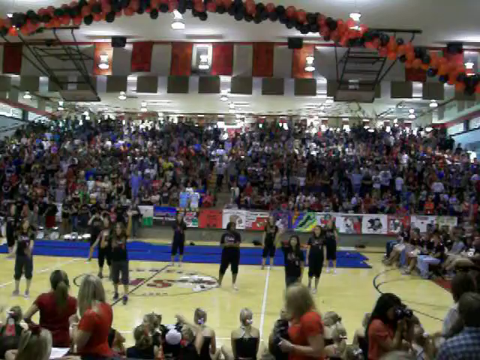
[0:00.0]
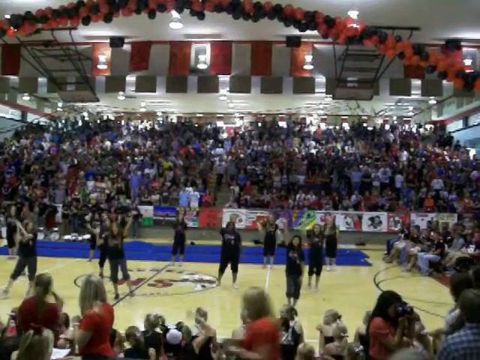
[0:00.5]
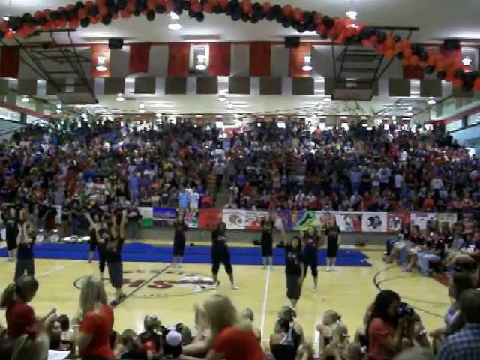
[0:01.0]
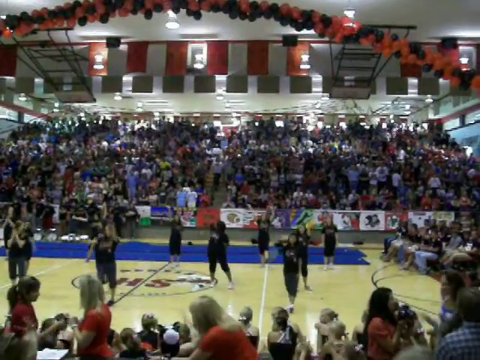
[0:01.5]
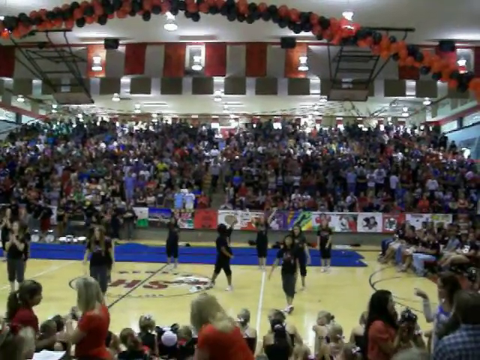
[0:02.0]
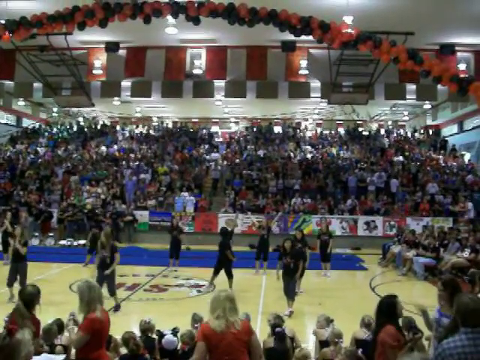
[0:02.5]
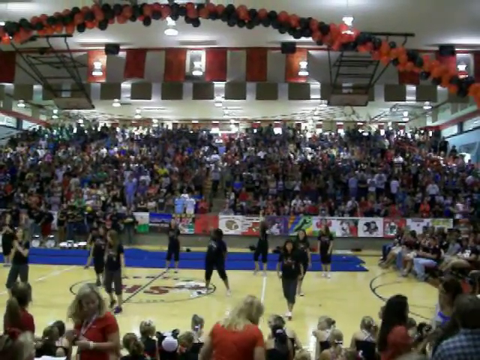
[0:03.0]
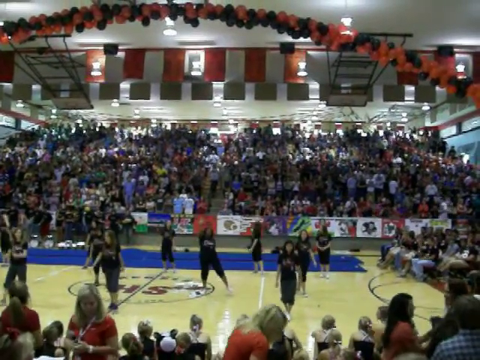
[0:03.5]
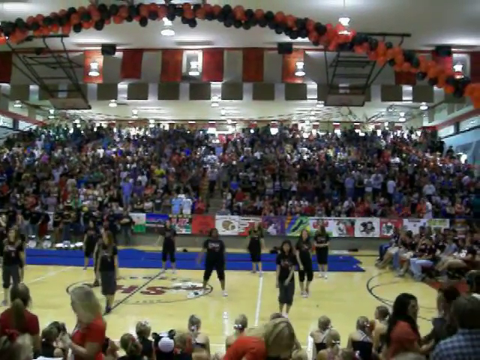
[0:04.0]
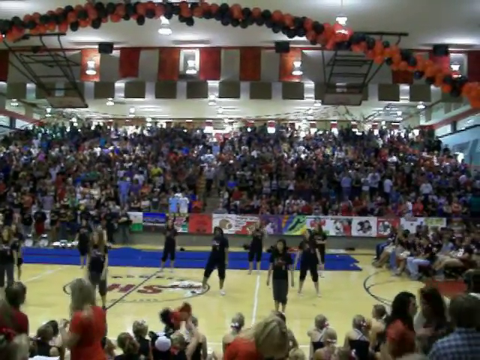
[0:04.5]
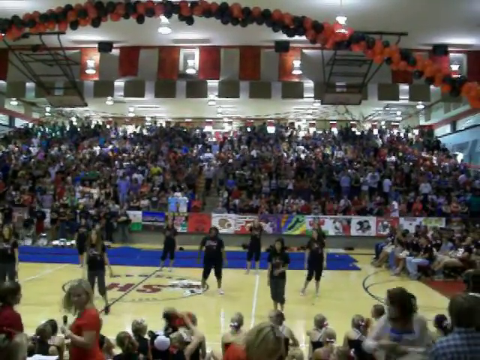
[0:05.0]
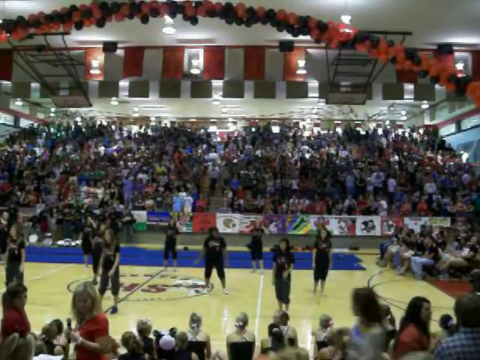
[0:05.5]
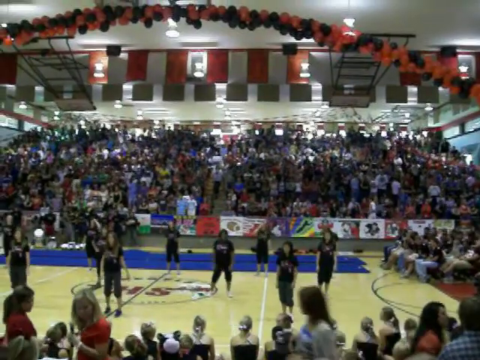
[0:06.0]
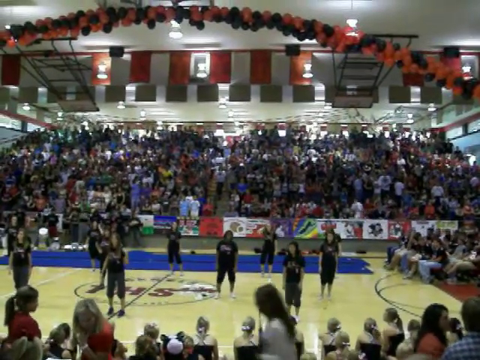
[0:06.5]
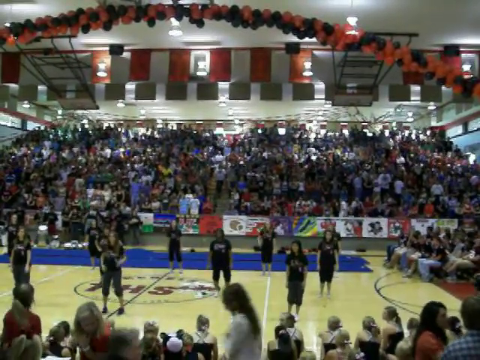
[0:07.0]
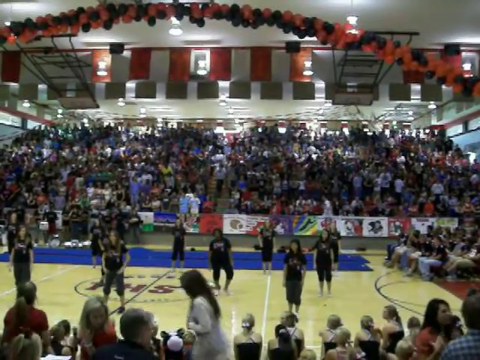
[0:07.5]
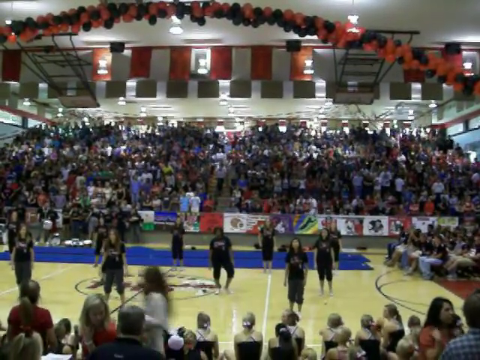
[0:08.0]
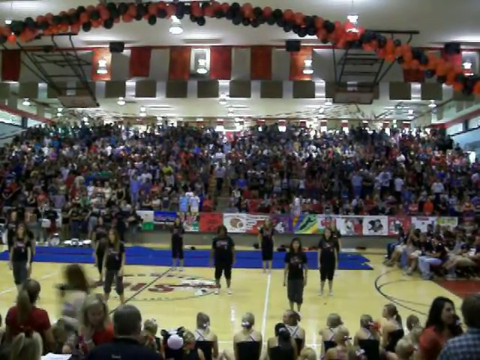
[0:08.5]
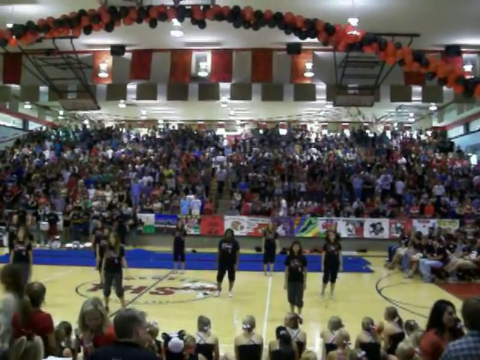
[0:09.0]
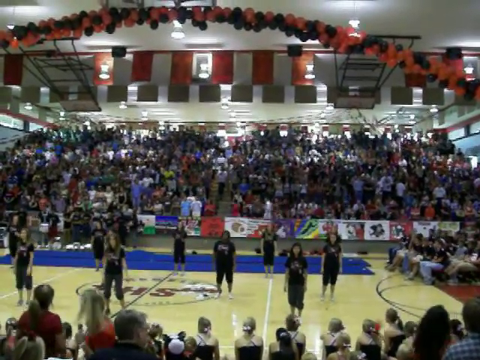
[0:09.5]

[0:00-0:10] The setting appears to be a basketball arena or gym, apparently a smaller gym. There is a logo on the court, only partly visible; the last letters may be "HS" or "THS," possibly the school's initials. A group that may be a spirit squad, cheerleaders or a dance team is on stage, standing relatively still, and then they begin to move. Many people are in the stands, and there are balloons. Overall it looks like a college or high school stadium.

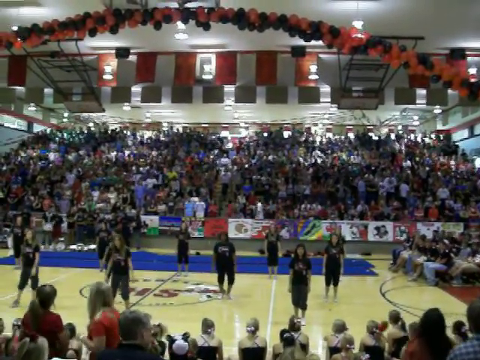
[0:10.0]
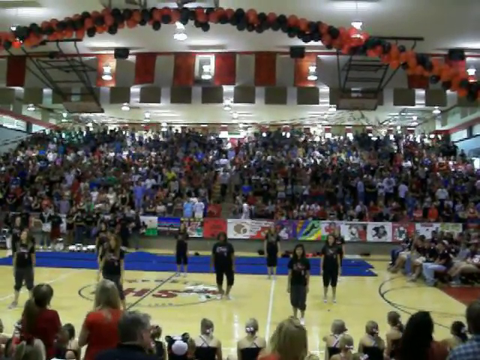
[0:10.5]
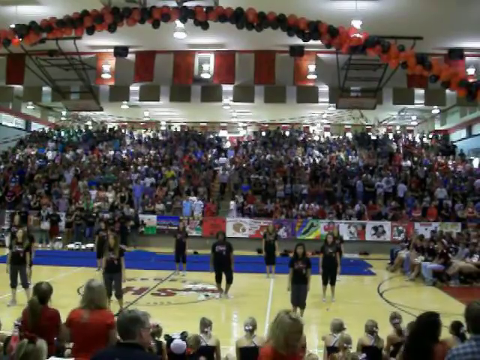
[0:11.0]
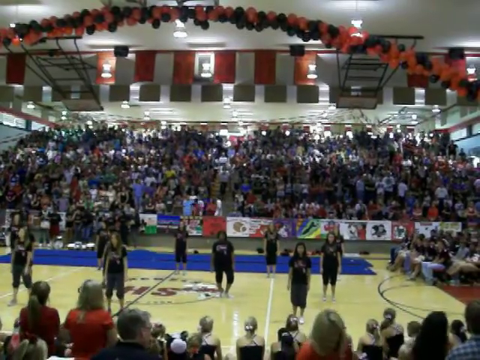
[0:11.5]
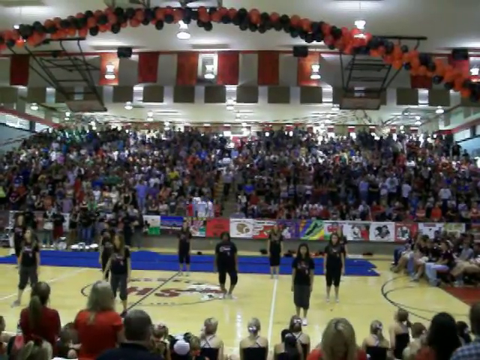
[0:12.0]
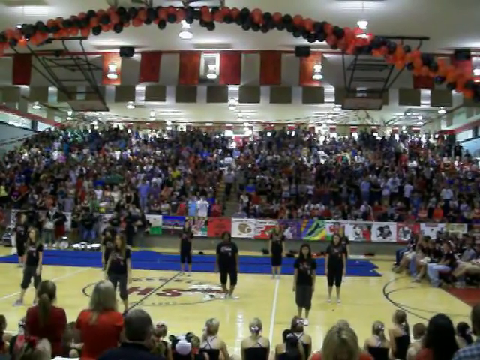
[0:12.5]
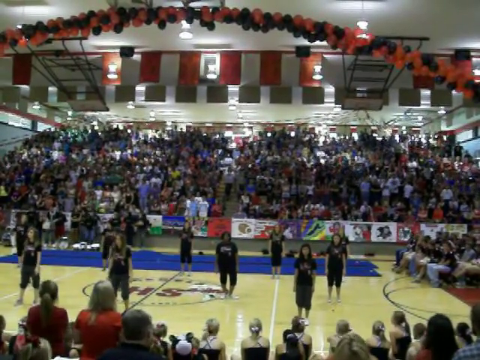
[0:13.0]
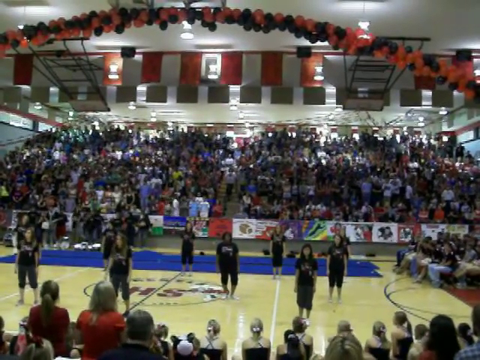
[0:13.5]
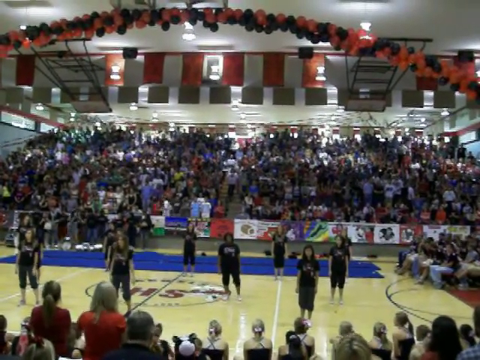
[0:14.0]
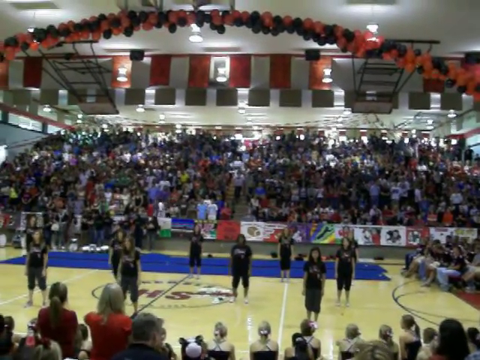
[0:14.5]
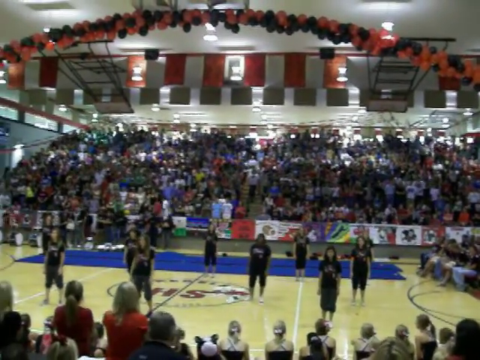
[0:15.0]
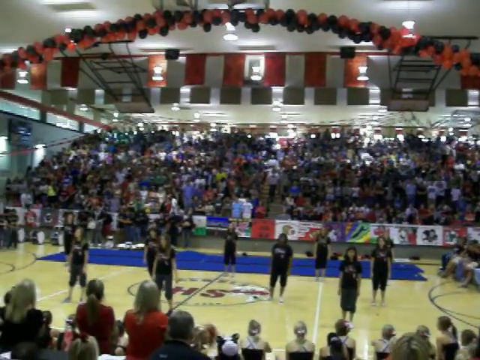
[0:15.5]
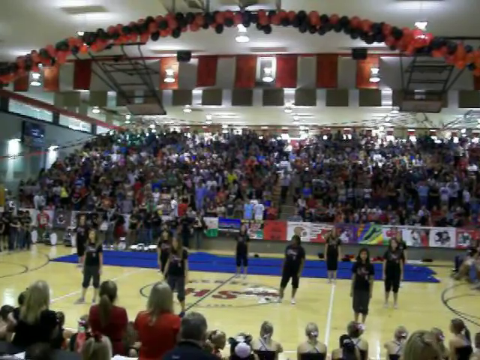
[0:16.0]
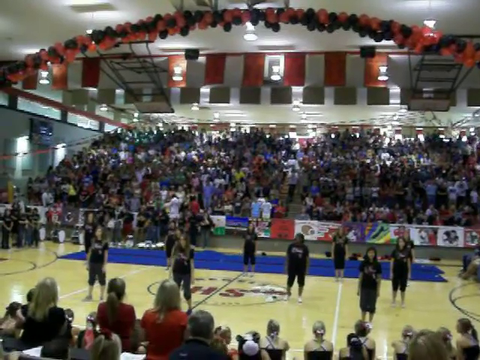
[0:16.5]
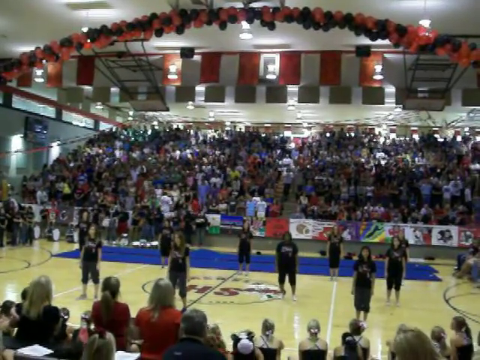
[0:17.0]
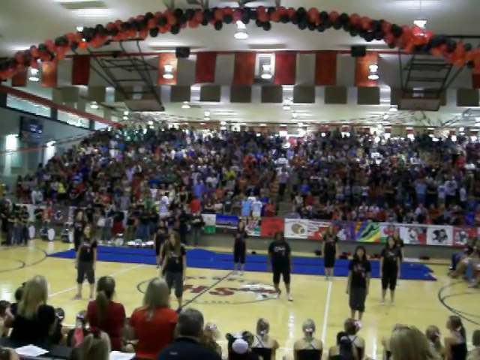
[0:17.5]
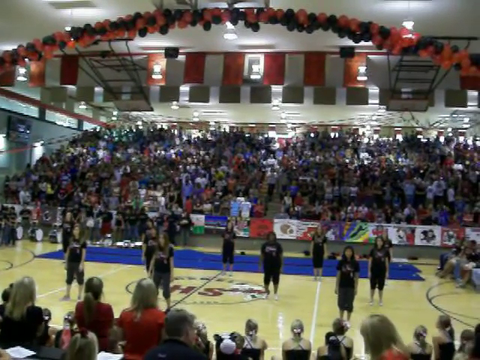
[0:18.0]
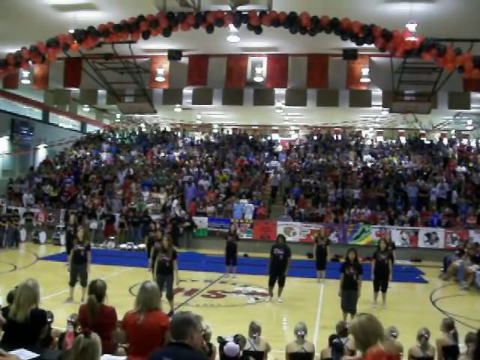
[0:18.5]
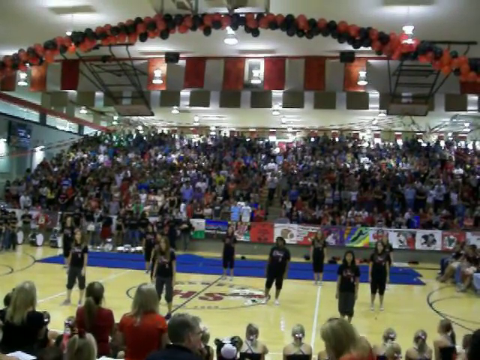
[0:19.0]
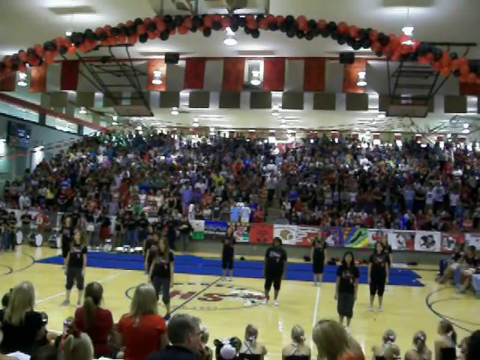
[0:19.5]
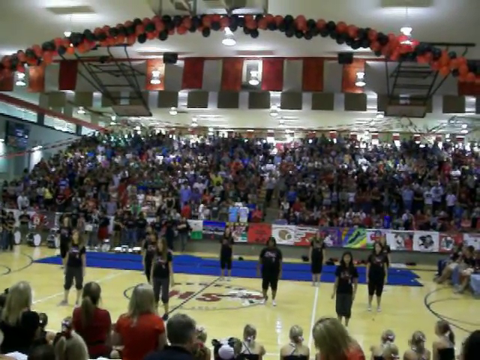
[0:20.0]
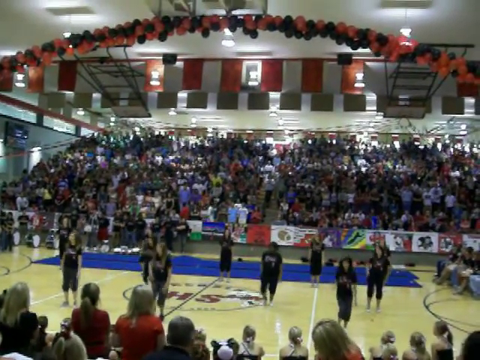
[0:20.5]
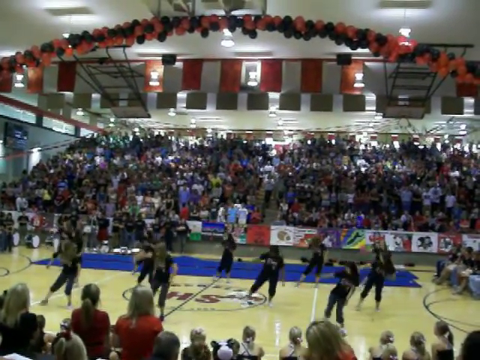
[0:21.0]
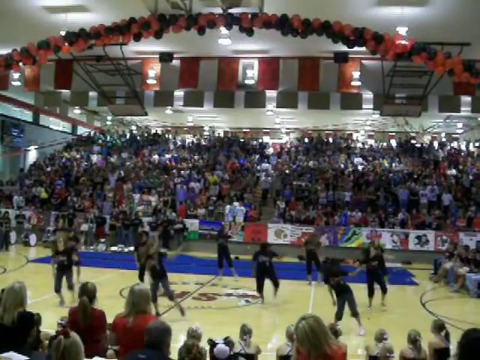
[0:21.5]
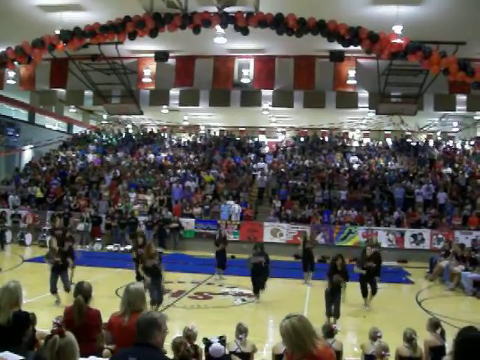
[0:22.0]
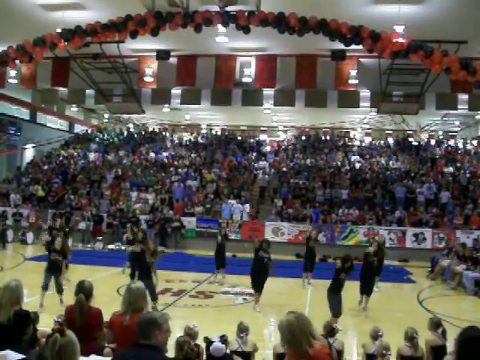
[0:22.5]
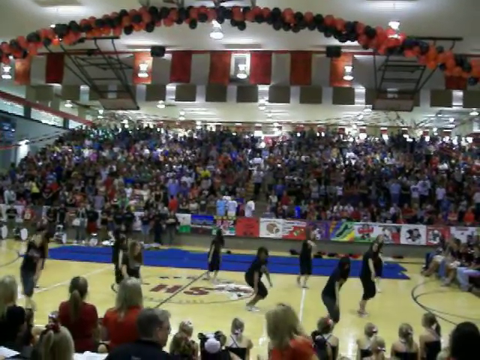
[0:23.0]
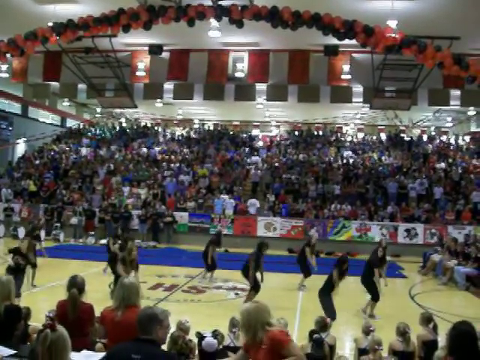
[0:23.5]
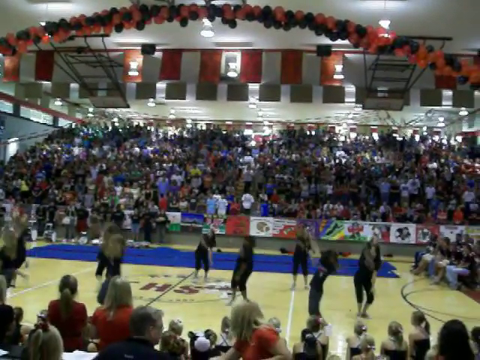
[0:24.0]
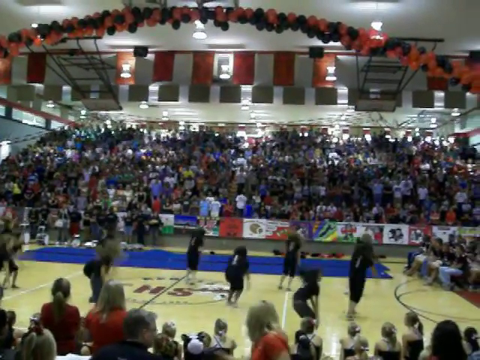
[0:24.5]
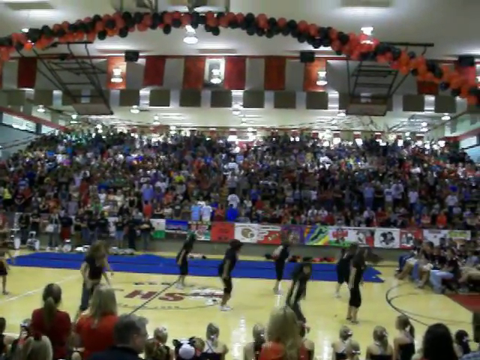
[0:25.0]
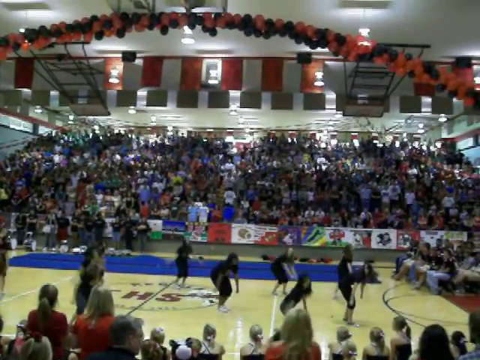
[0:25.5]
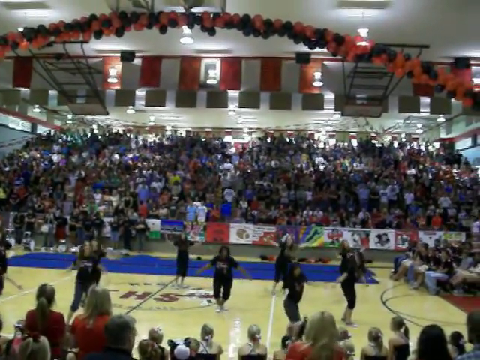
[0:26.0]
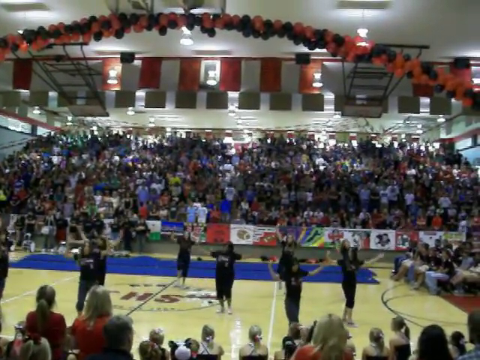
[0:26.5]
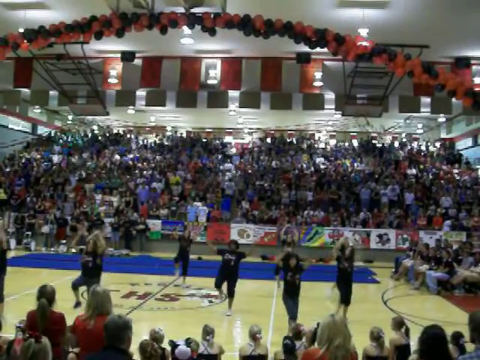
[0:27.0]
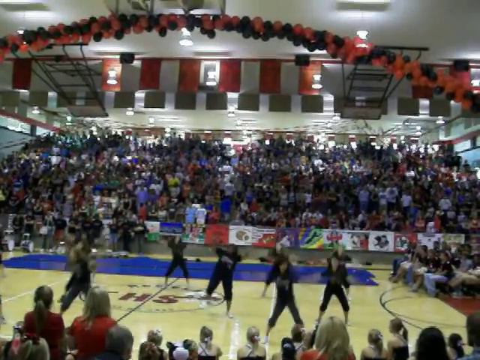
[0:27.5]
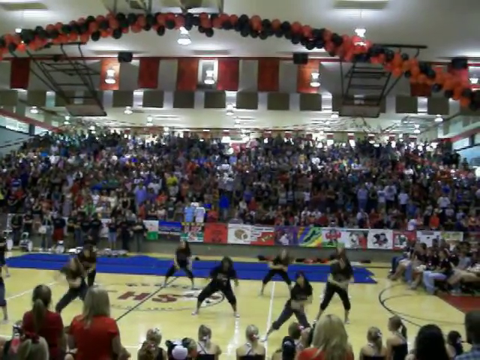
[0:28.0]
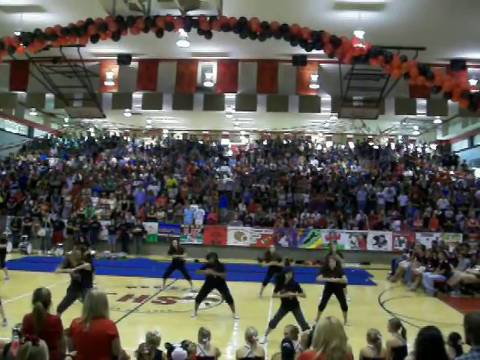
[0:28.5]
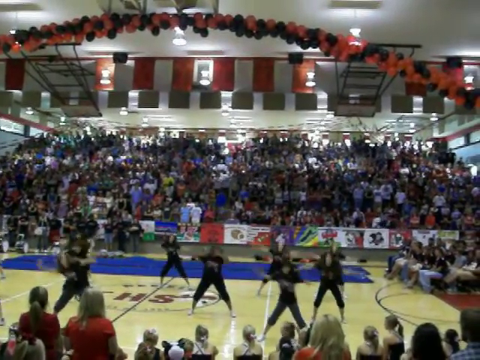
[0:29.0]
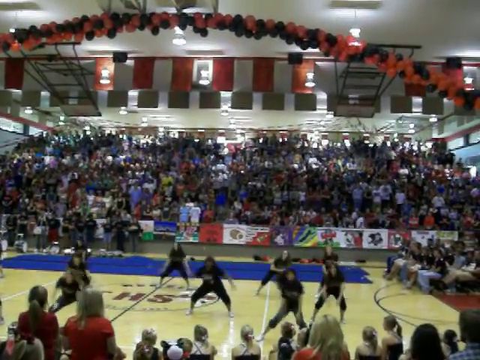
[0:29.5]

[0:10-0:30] In a gym, apparently a high school or college gym, a group of approximately 10 women is on the floor. They are still at first, then begin to dance. In the background, a relatively small crowd watches. A big arrangement of orange and black balloons is at the very top, on the roof. The women wear black outfits. They dance for a few seconds. On the right side there appears to be a group of people sitting, possibly players, other students or teachers on the court; it is perhaps a presentation or assembly.